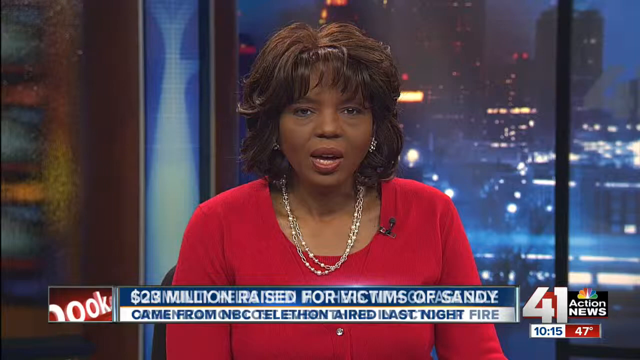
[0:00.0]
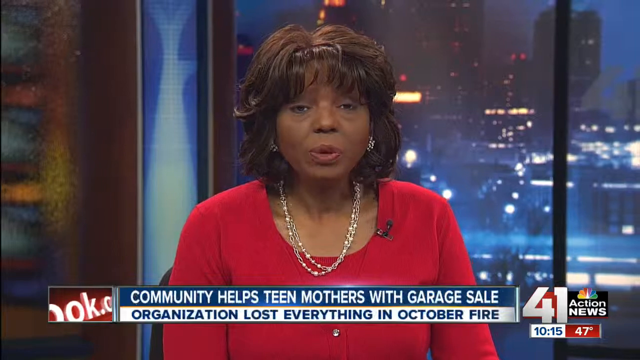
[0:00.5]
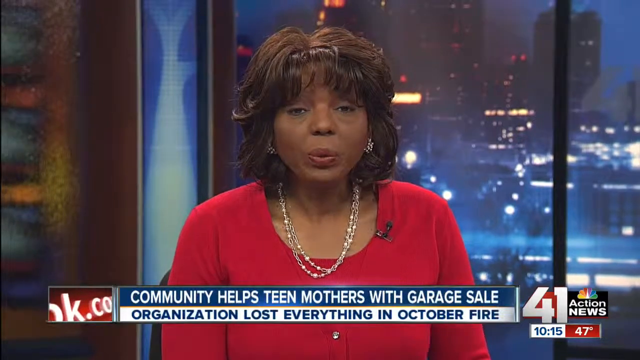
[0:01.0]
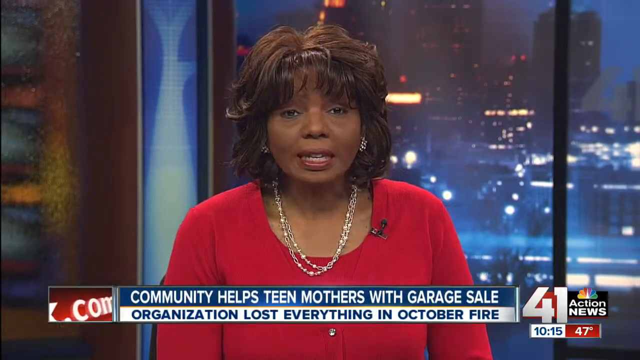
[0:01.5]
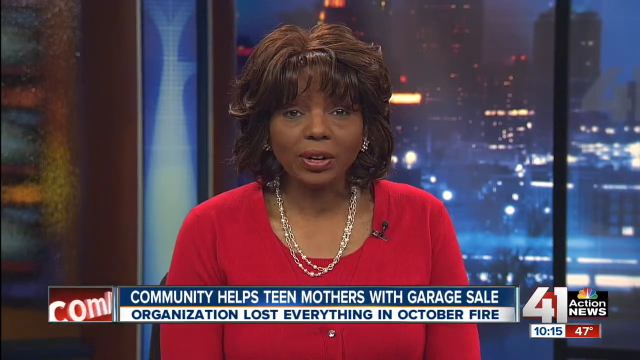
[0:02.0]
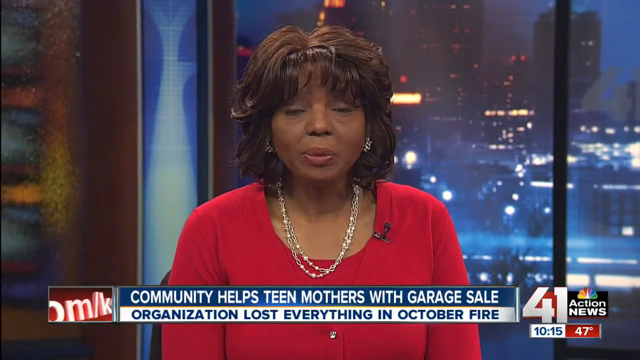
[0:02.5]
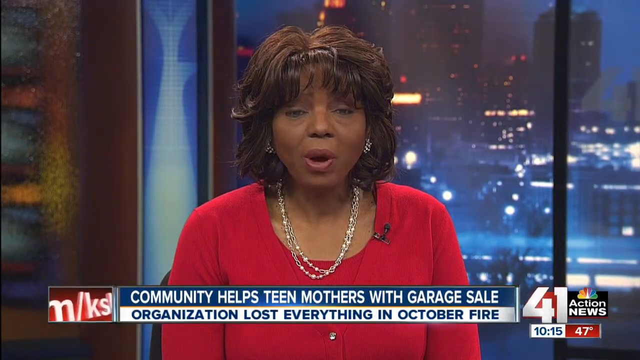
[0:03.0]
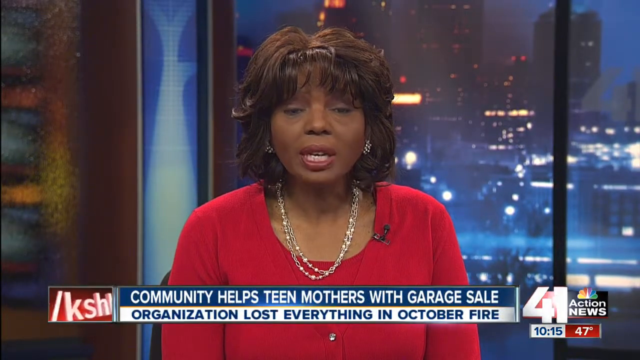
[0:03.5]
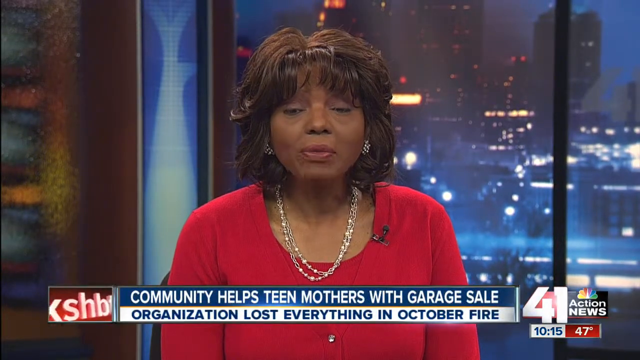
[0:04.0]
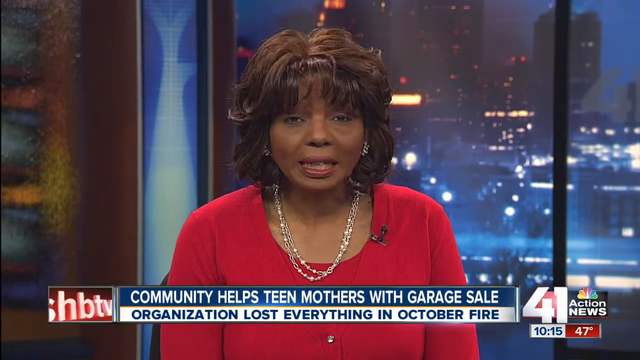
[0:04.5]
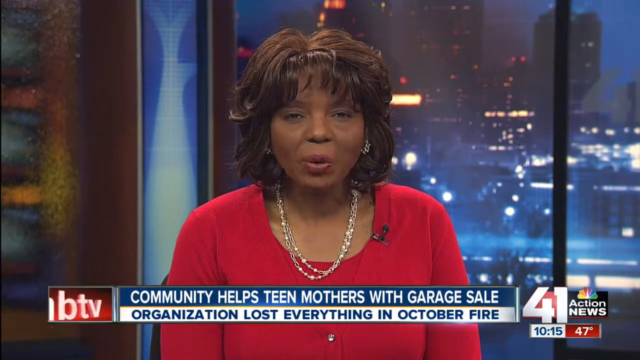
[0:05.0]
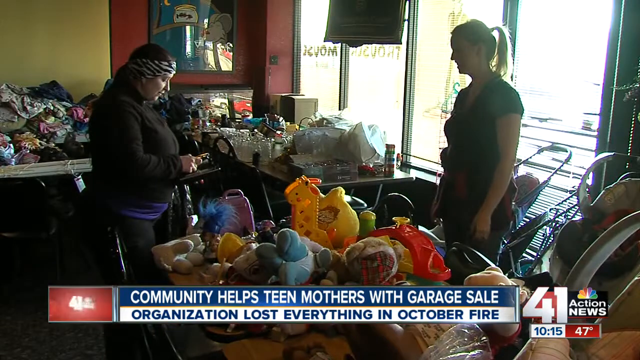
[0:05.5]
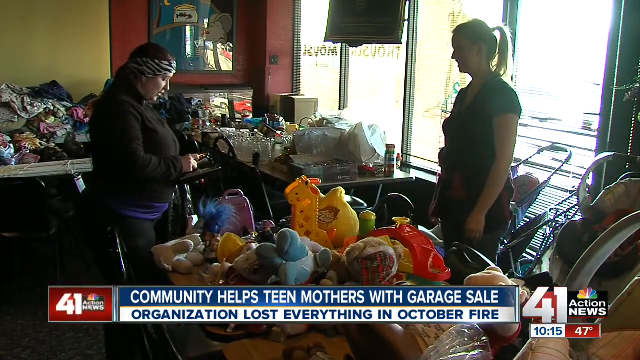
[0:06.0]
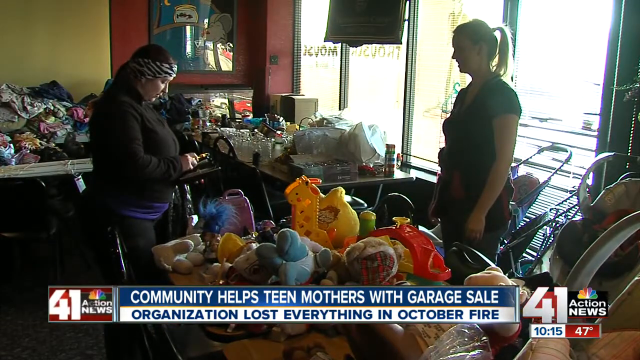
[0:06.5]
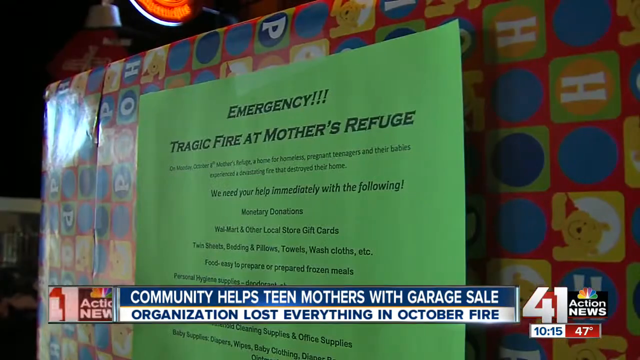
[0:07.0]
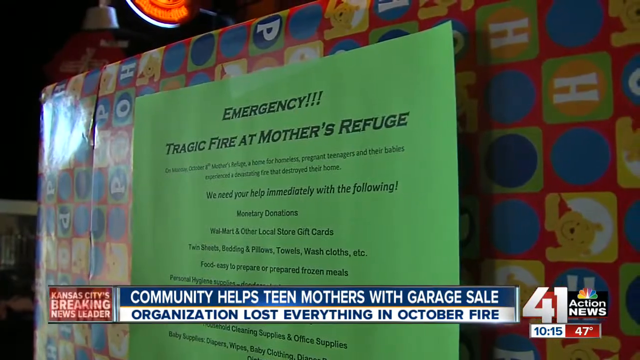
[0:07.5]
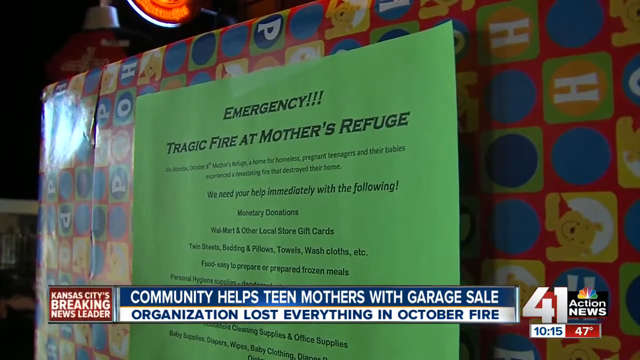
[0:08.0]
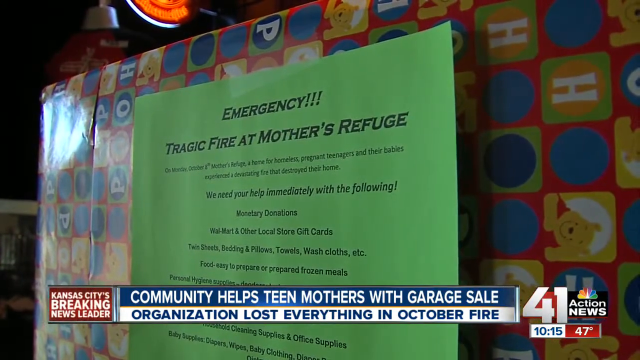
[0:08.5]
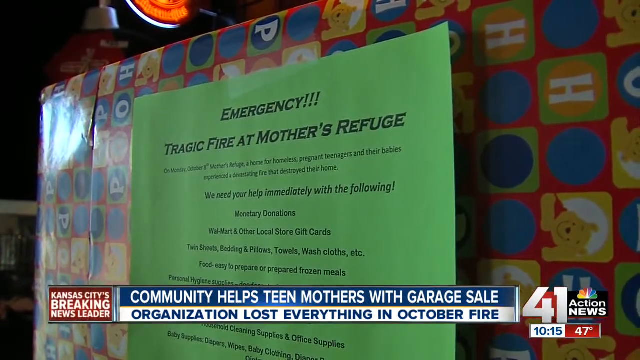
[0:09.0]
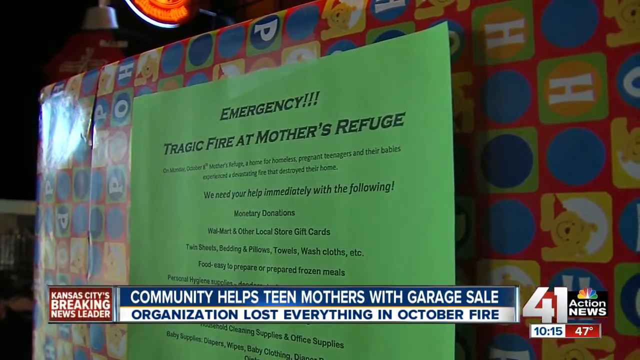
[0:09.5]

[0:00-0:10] A woman newscaster with dark brown hair, a large necklace, and a red blouse looks directly at the camera, with a screen showing a city behind her. She speaks to the camera while a news overlay at the bottom of the screen reads "Community helps teen mother with garage sale." The video quickly cuts to a garage sale setting with two women, one holding a wallet and the other looking directly at her. It then quickly cuts to an image of a piece of paper that reads "Emergency, tragic fire at Mother's Refuge," with more information in black text below it. Next, multiple people sort through clothes at an indoor location that looks like a garage sale.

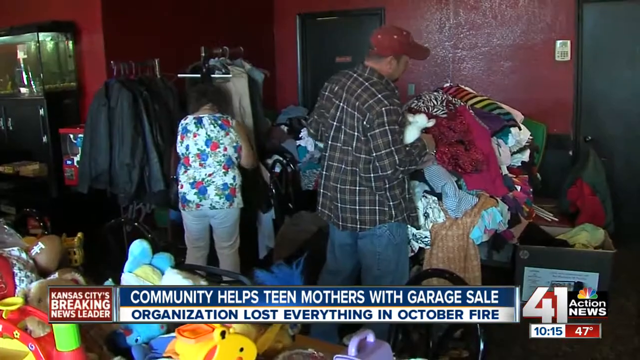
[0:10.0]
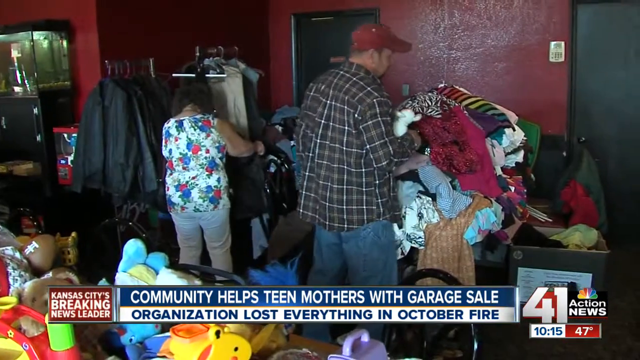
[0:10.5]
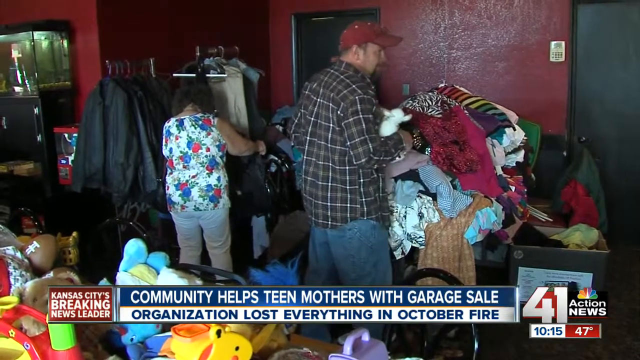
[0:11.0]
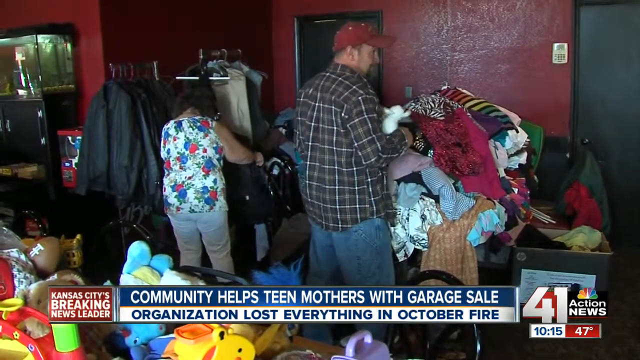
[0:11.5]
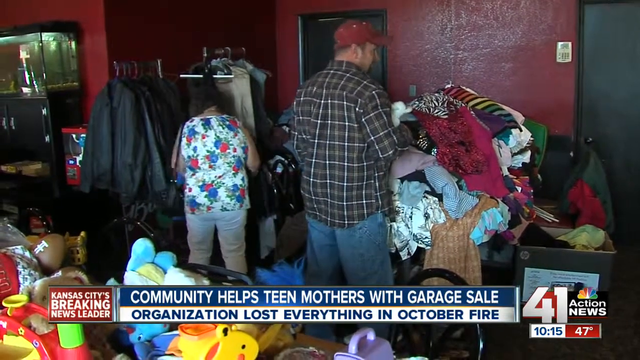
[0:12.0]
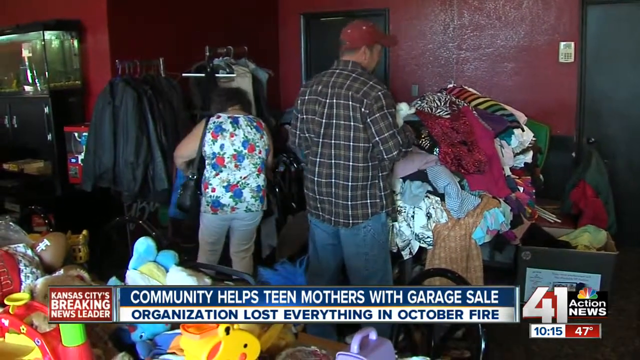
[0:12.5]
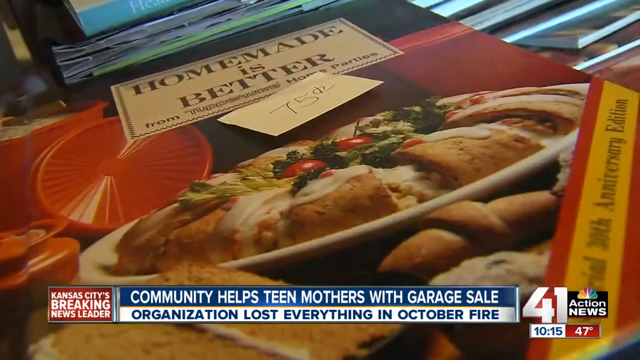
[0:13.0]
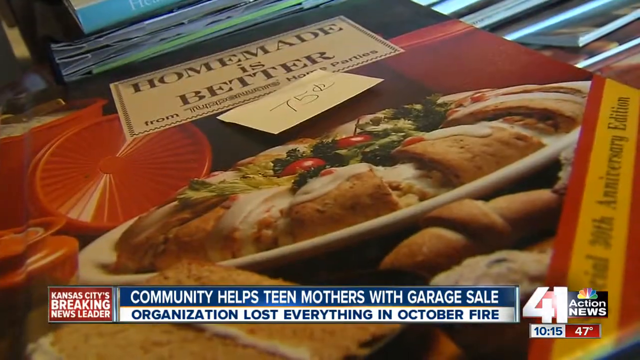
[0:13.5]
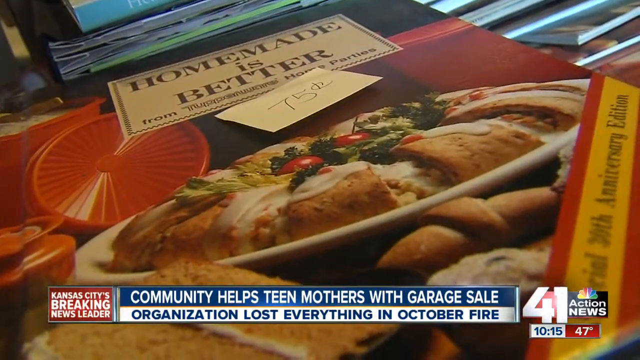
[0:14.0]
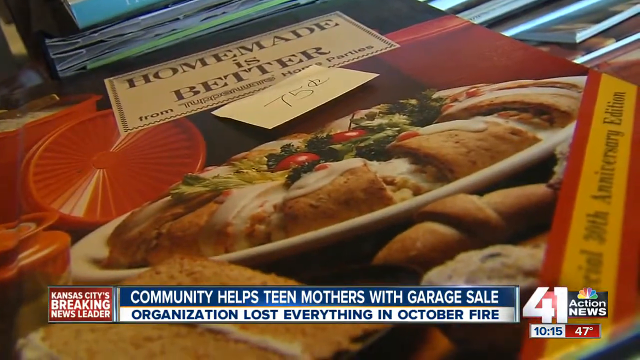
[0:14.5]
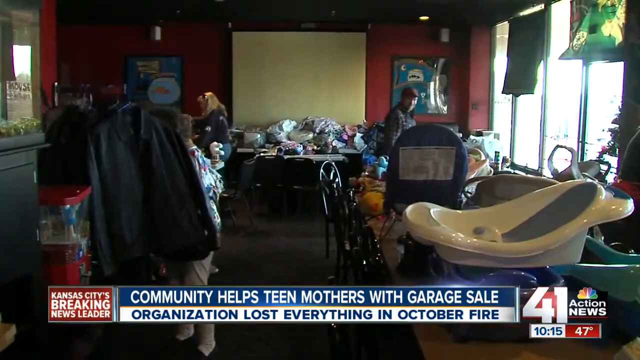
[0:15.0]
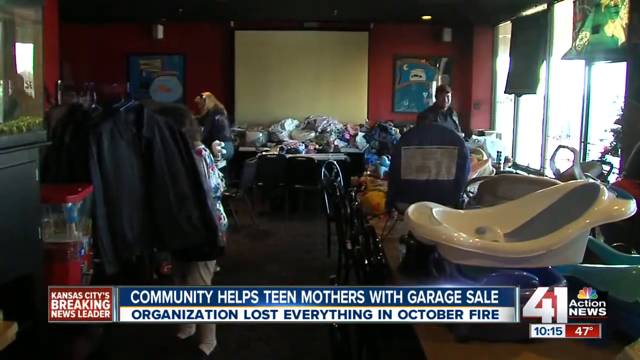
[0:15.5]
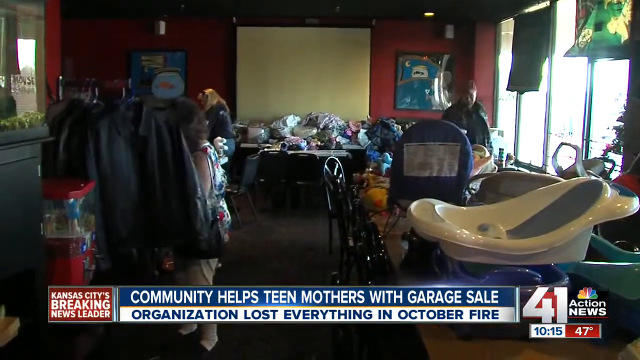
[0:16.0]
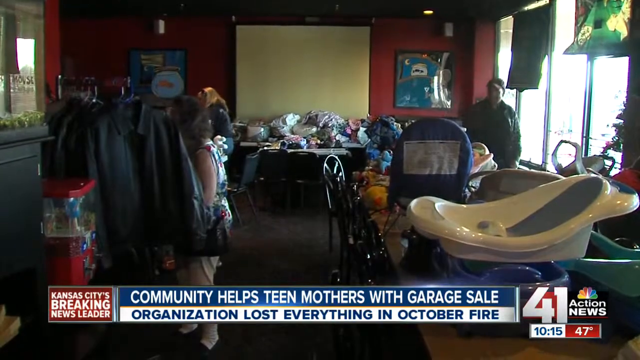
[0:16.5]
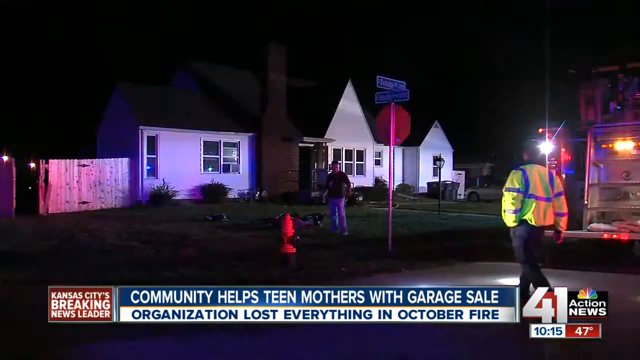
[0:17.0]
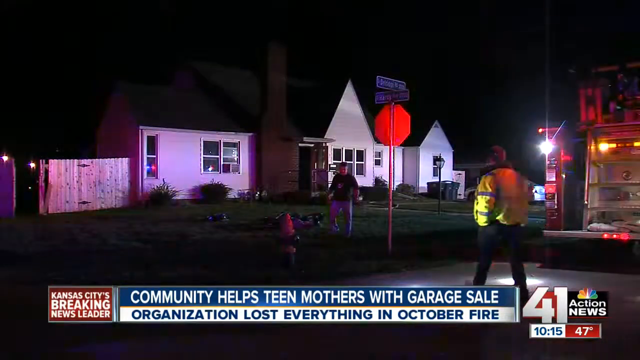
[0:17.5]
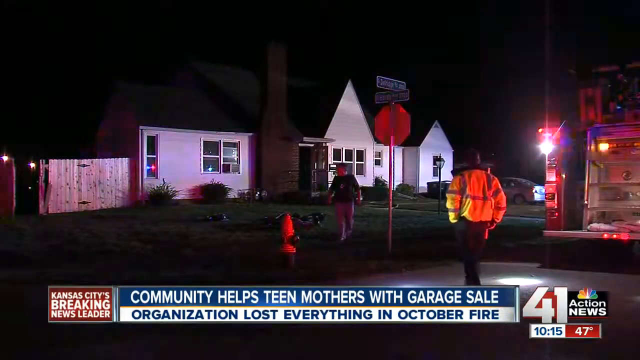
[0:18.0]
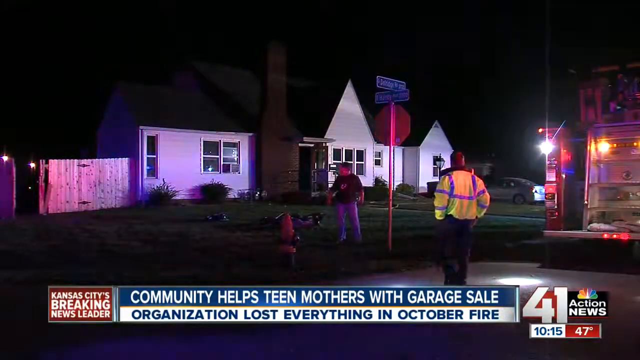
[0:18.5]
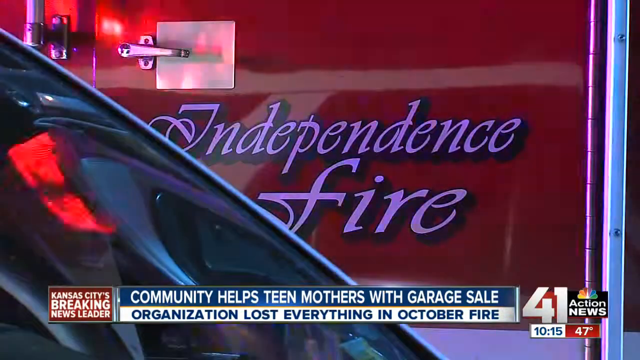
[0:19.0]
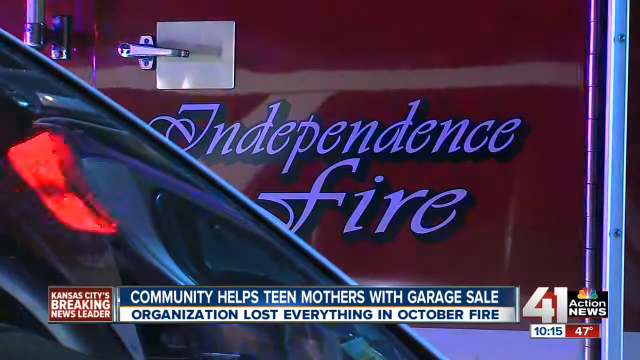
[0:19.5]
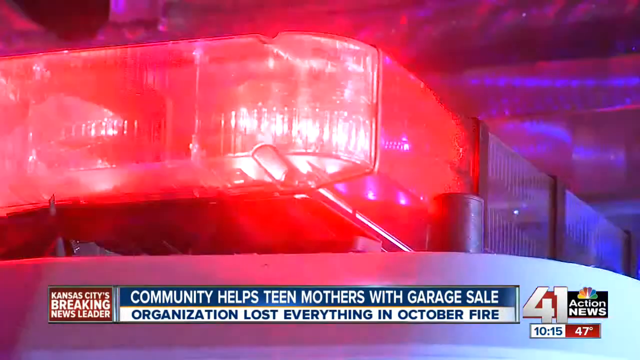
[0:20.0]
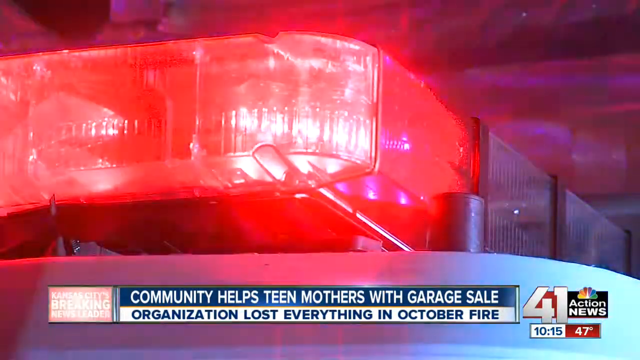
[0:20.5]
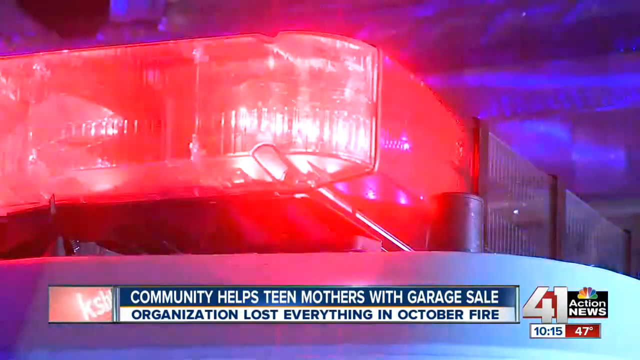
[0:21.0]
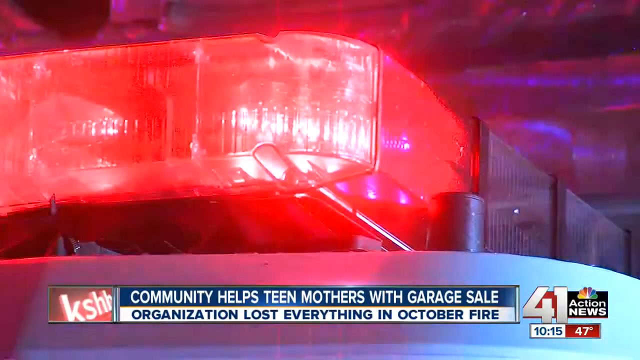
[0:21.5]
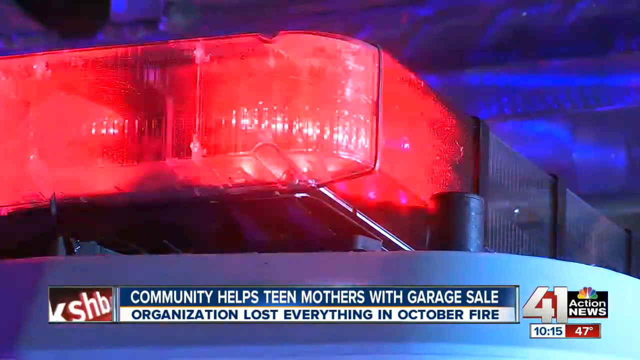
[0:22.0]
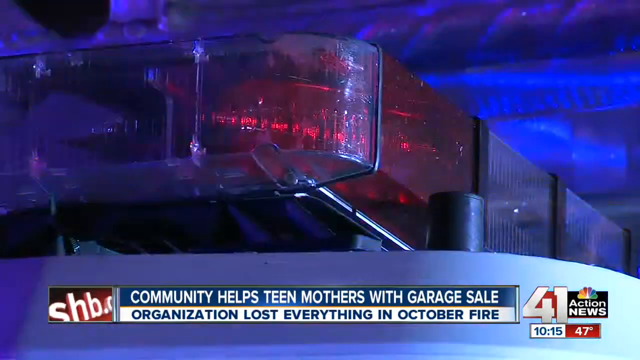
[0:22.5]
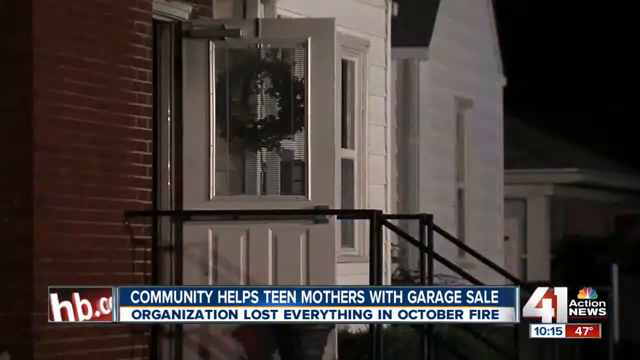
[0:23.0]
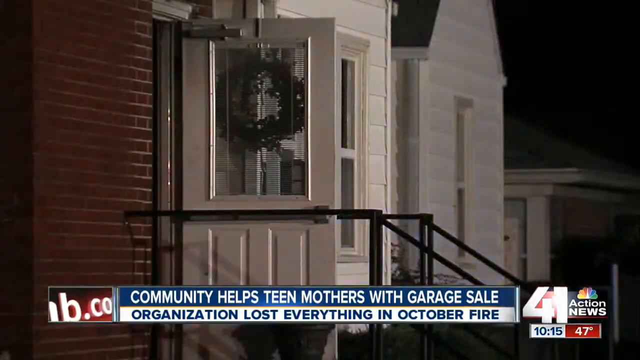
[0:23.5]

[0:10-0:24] A man and a woman sort through clothes at the garage sale. The video cuts to an image of a cookbook, then quickly to another image of the garage sale, where two different women look around through the items. It then cuts to an image of a house with a fire truck in front of it, as an officer and a man walk across a lawn and the fire truck's lights flash very brightly. Another shot shows the side of a fire truck reading "Independence Fire," followed by a shot of lights flashing on a car.